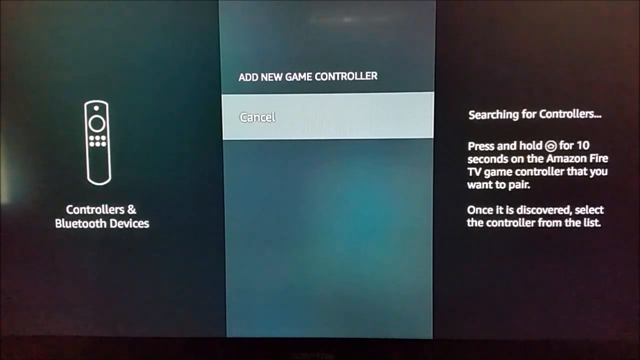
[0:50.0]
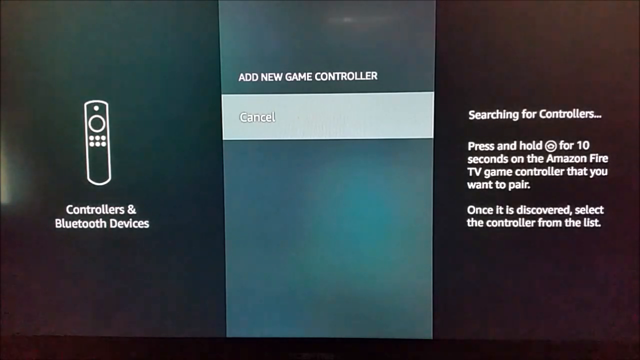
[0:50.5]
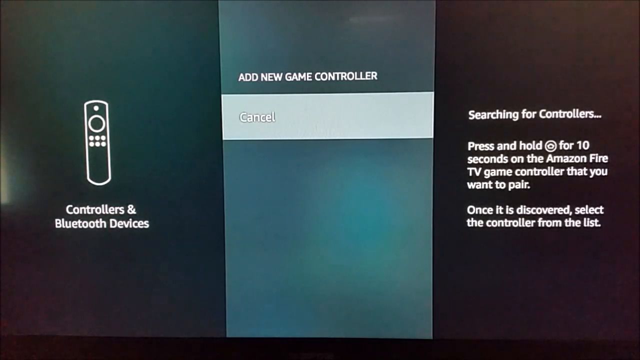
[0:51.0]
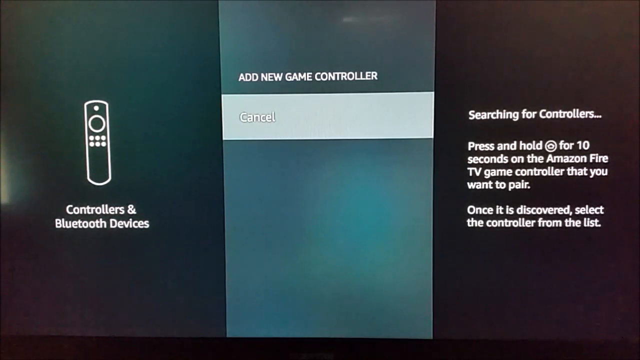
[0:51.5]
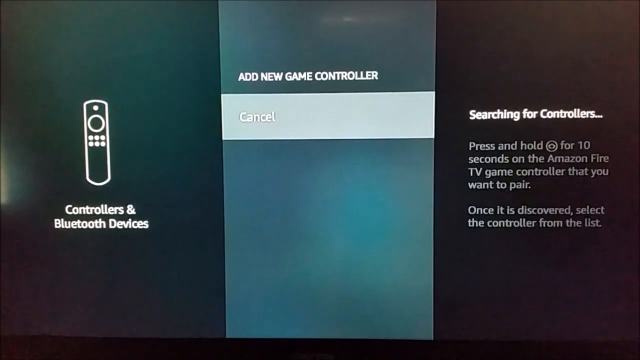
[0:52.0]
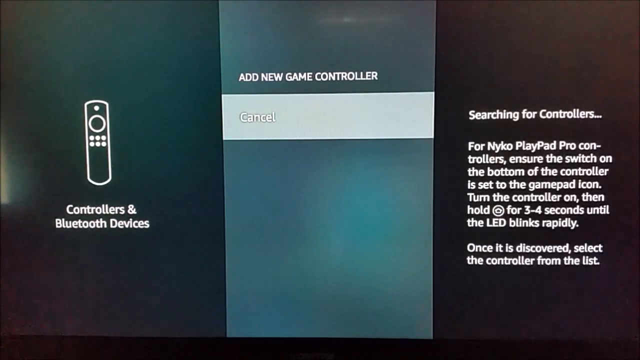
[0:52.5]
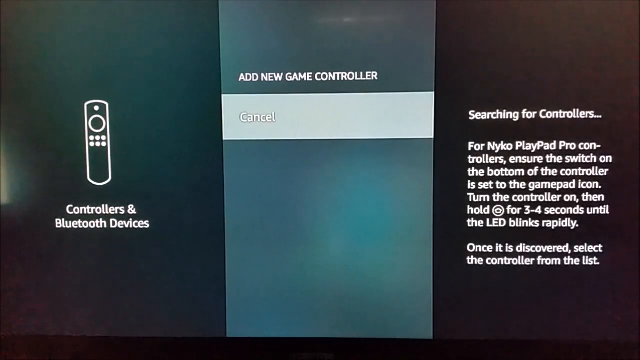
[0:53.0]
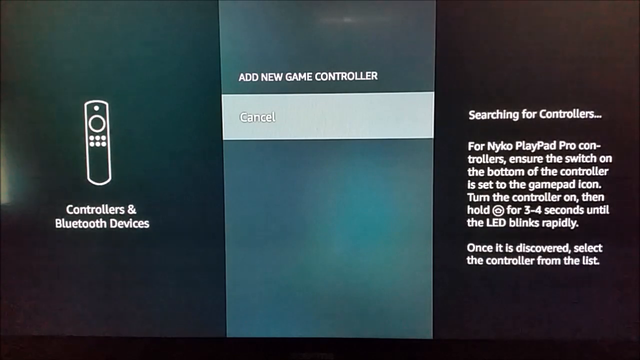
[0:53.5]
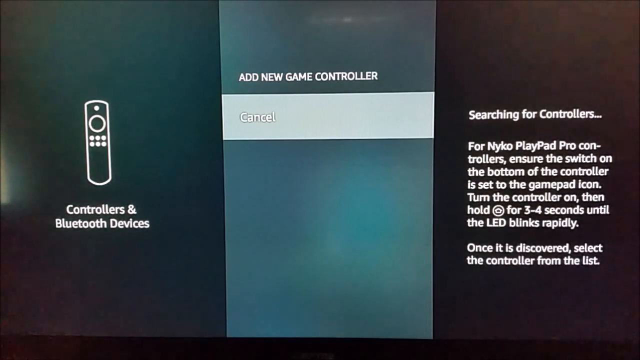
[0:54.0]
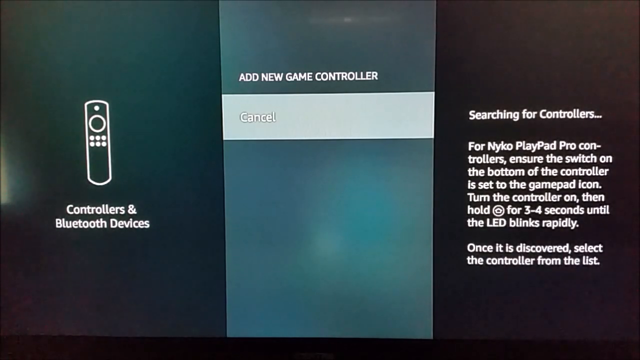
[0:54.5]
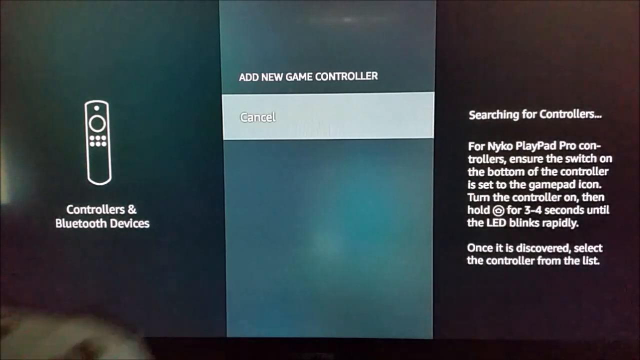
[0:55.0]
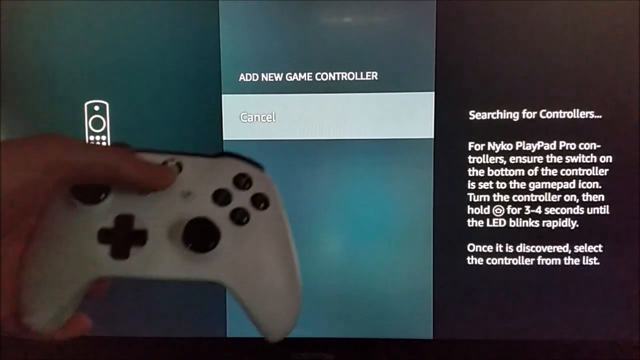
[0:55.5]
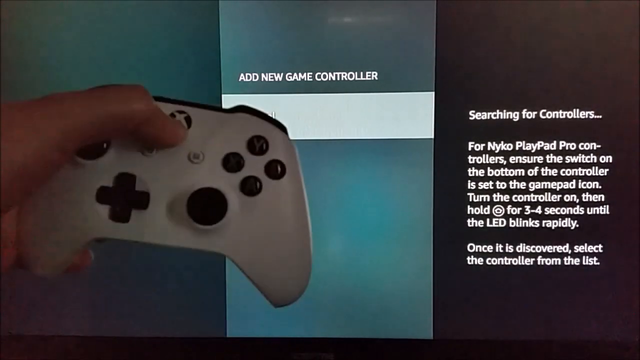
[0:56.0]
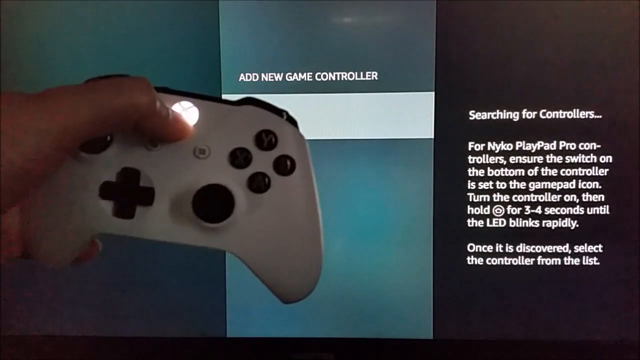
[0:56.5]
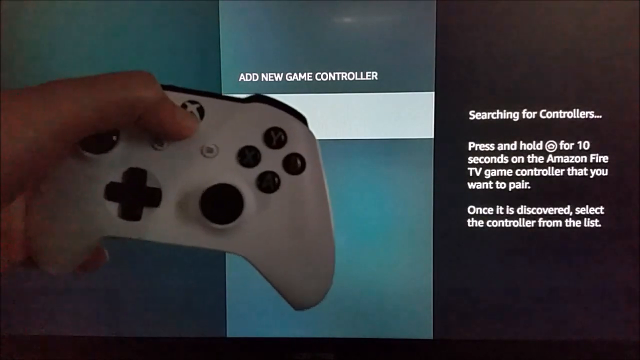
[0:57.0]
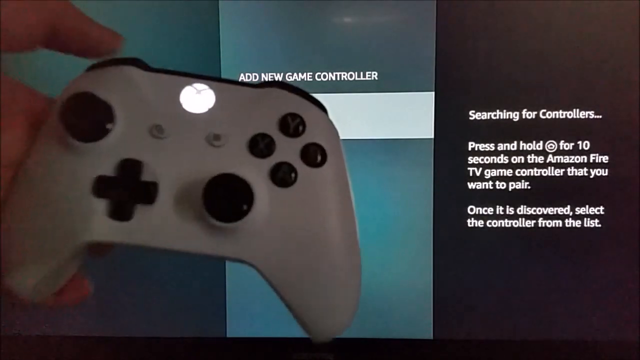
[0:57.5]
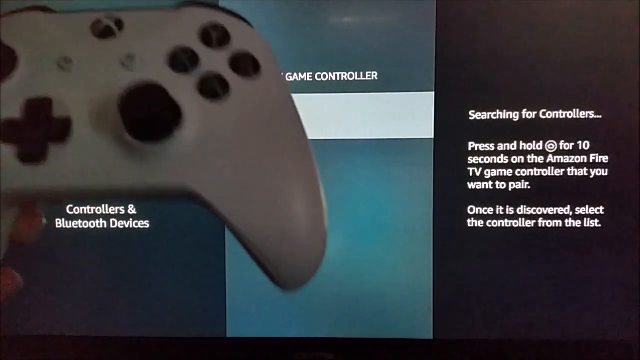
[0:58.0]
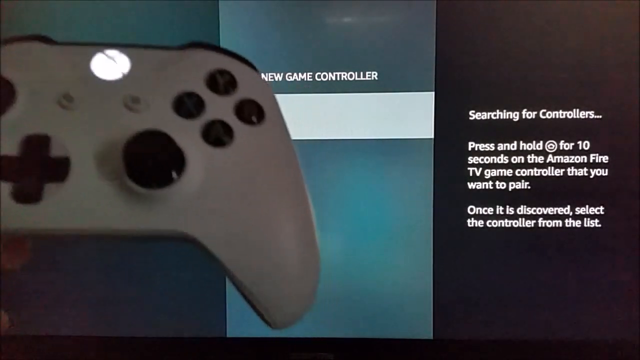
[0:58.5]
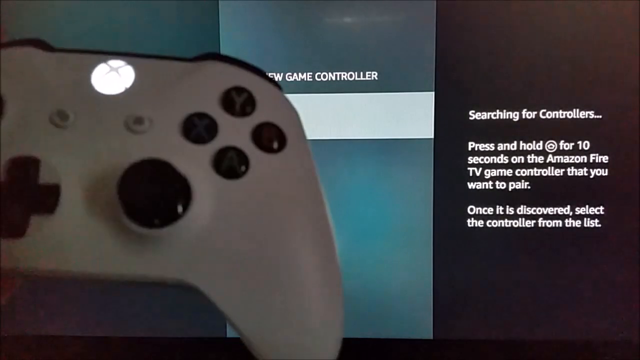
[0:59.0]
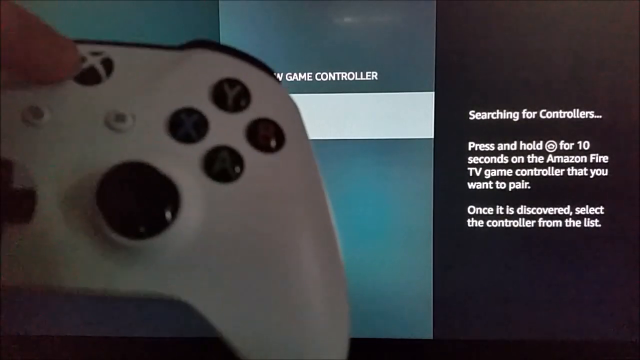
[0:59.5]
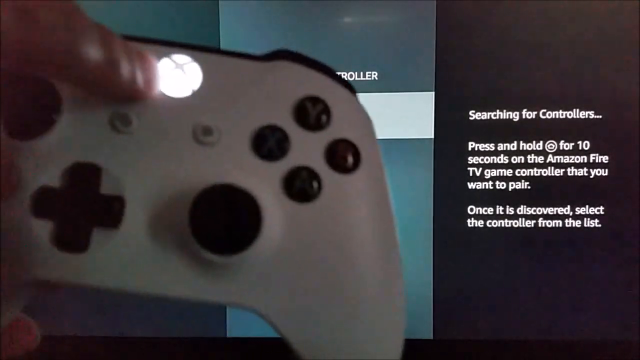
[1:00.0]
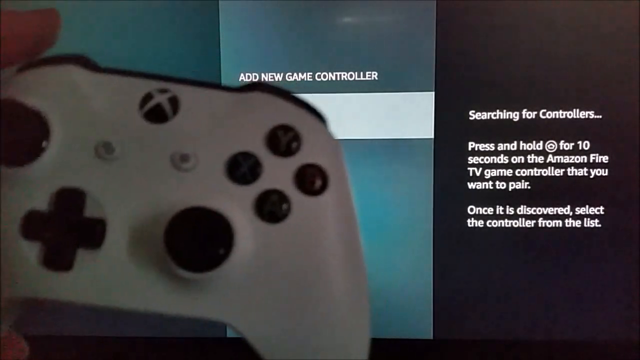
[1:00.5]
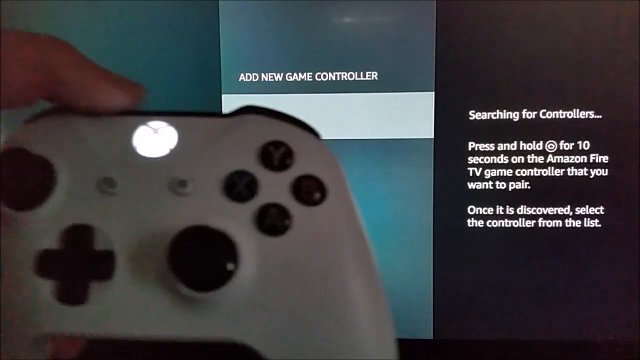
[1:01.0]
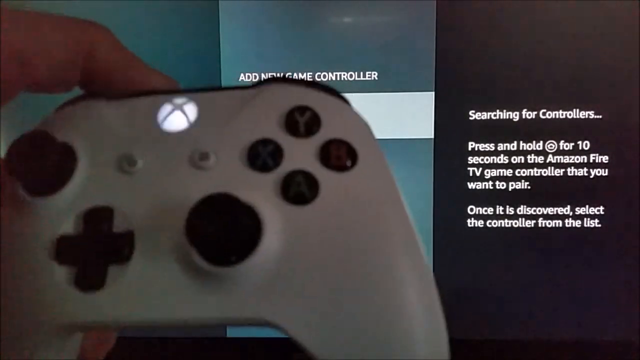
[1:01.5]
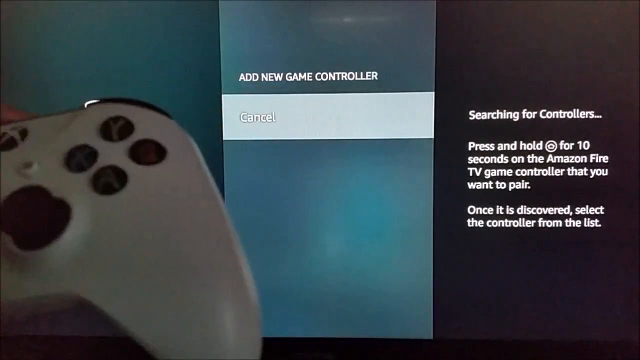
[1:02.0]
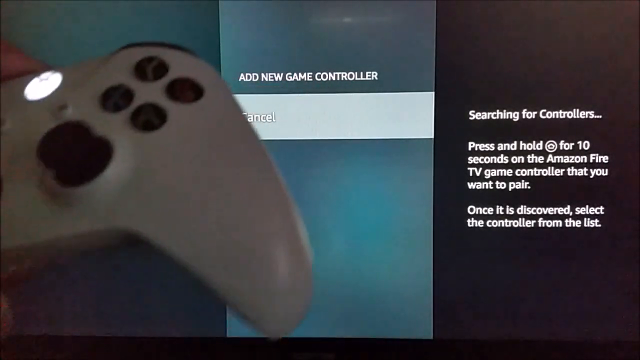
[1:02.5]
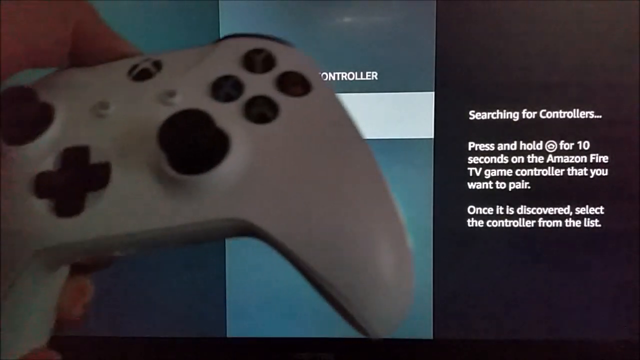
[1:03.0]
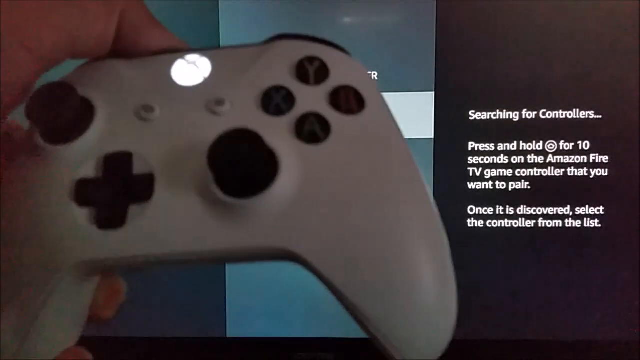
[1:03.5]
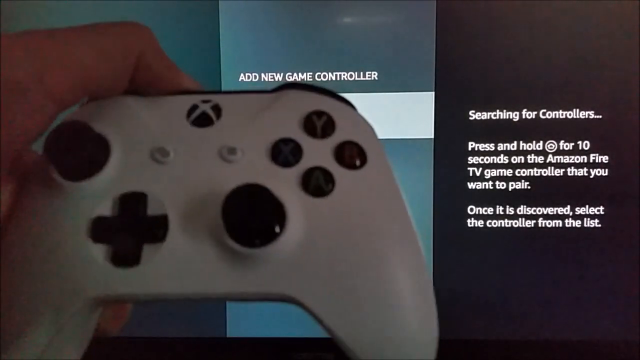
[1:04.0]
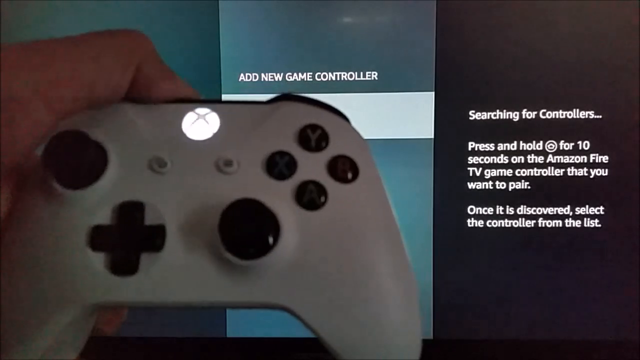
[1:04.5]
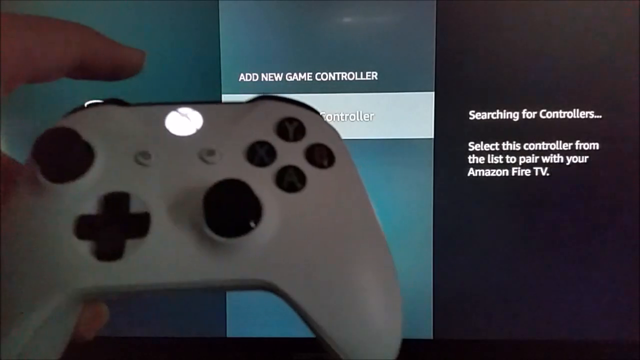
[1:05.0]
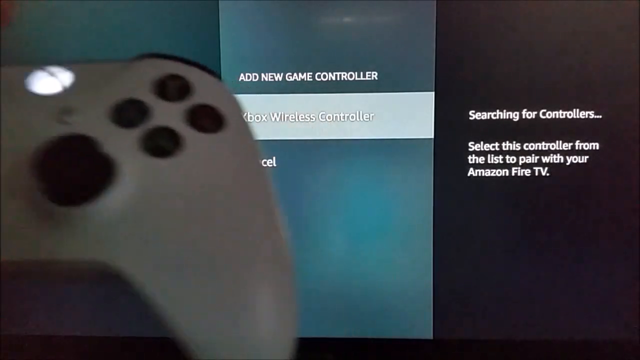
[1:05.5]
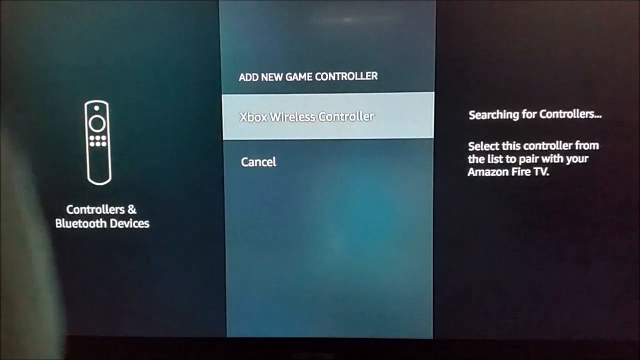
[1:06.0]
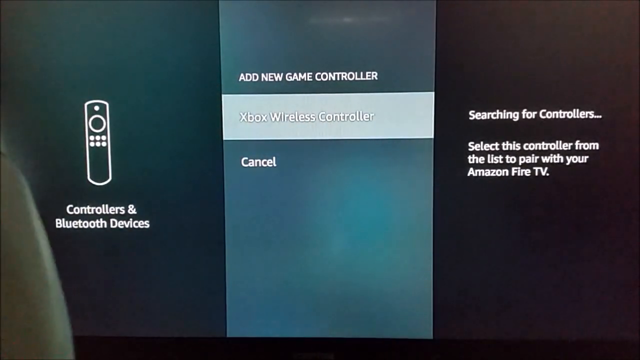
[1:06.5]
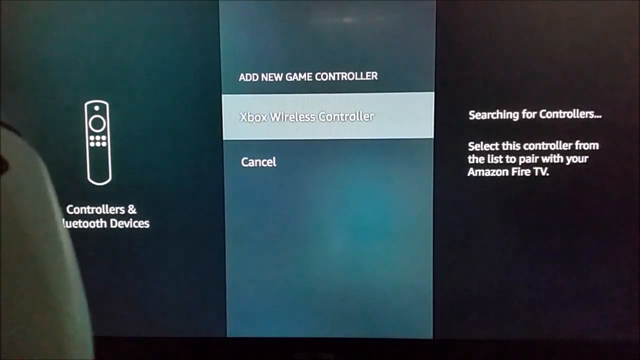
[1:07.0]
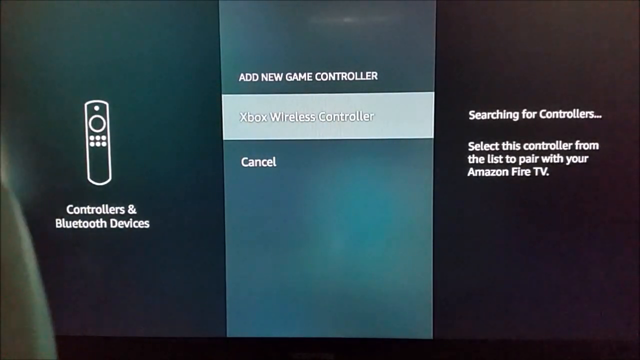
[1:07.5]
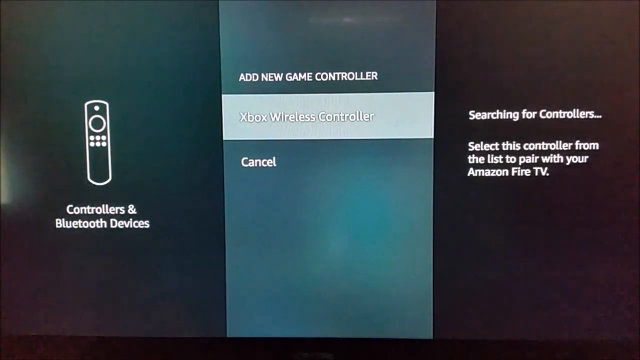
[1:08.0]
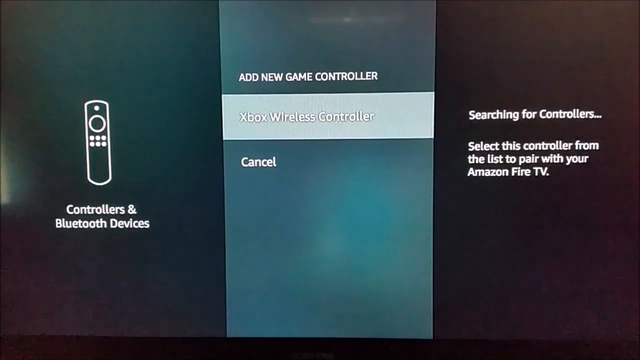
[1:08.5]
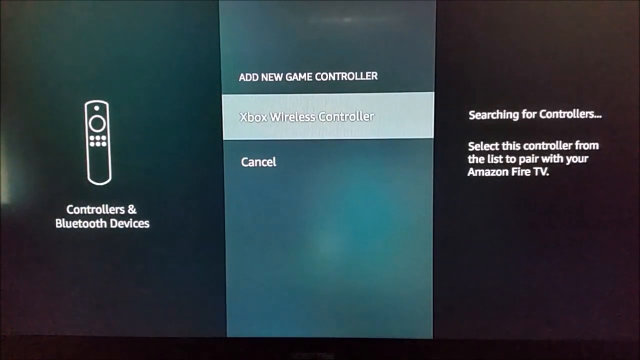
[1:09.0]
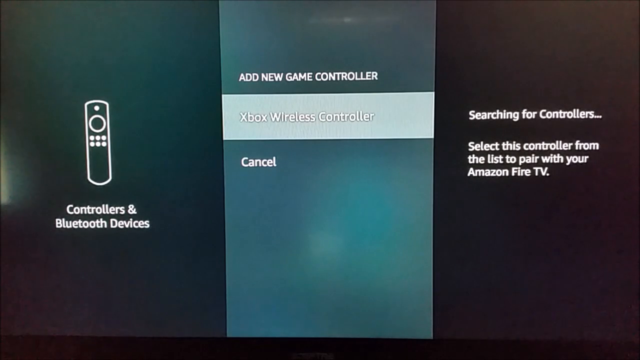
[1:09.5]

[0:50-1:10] An Xbox wireless controller is shown as the user tries to connect it. The user presses the button as instructed, and a white light shows each time it is pressed, indicating that it is connecting. The controller is white with black buttons, with up, down and side buttons, a joystick on the left and right, and Y, X, A and O buttons at the top right. It is unclear whether the controller has connected.